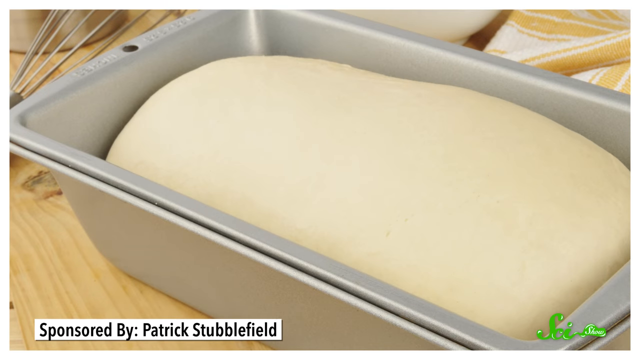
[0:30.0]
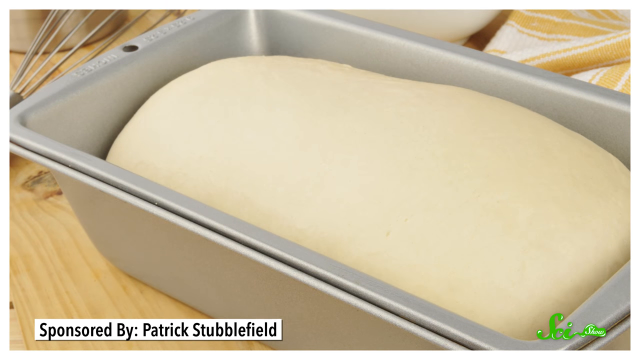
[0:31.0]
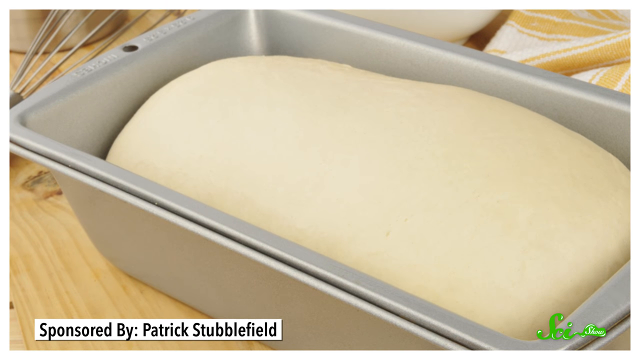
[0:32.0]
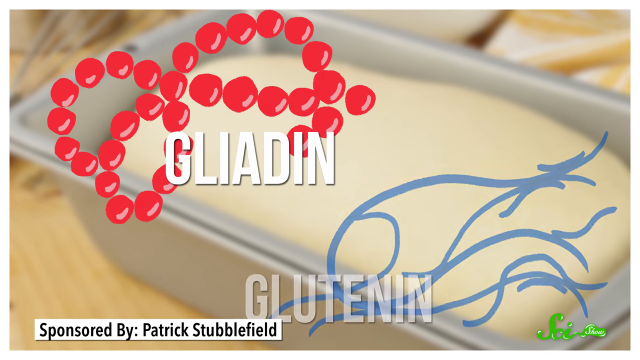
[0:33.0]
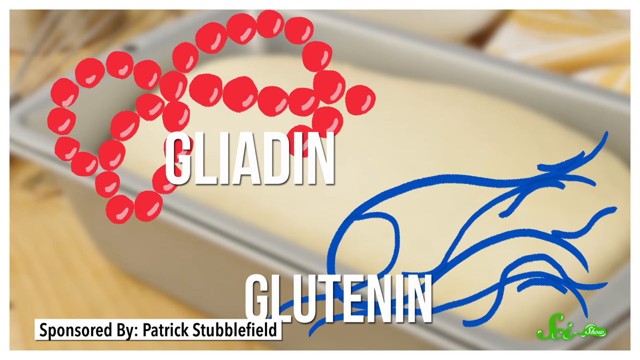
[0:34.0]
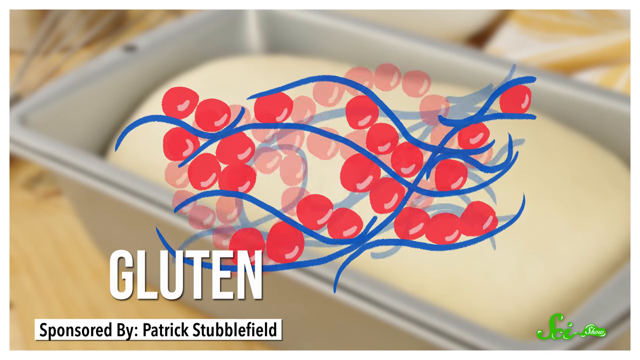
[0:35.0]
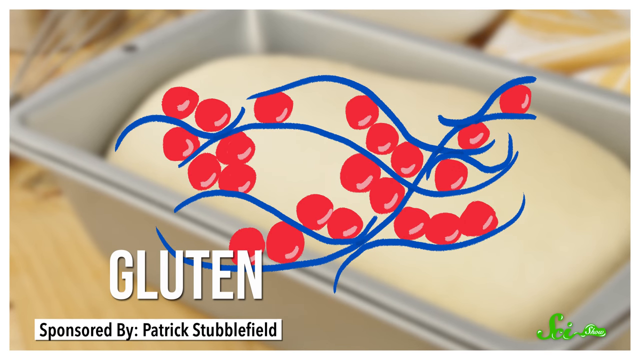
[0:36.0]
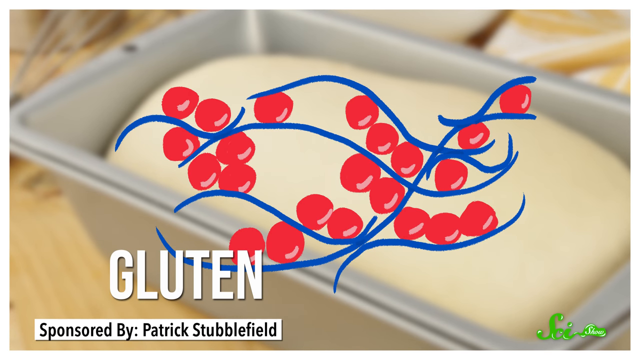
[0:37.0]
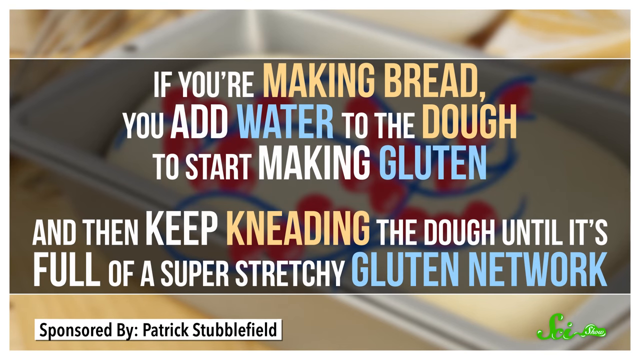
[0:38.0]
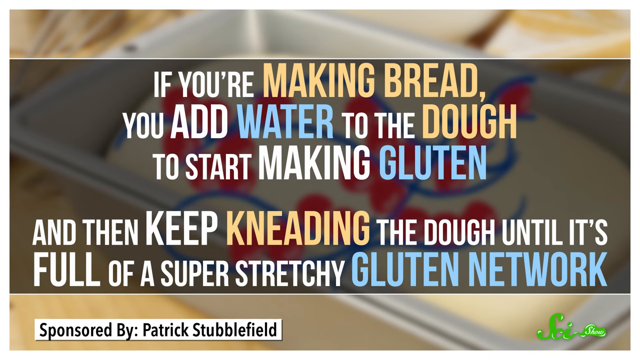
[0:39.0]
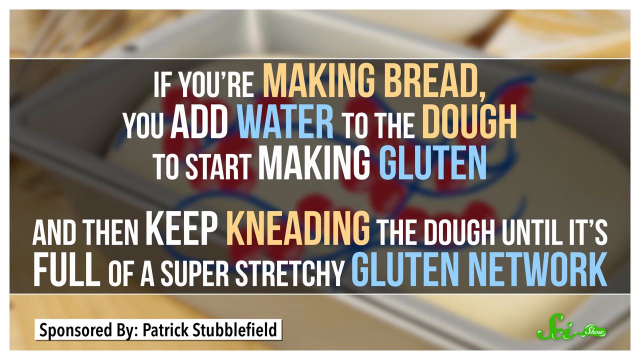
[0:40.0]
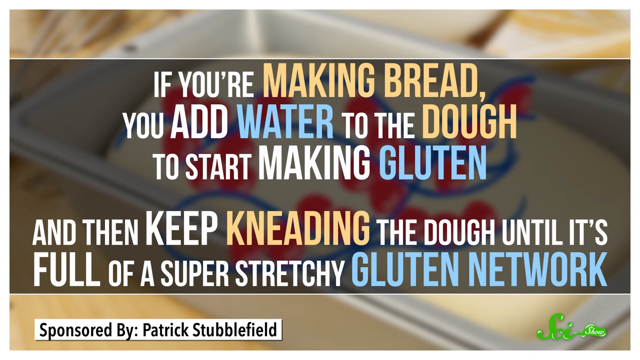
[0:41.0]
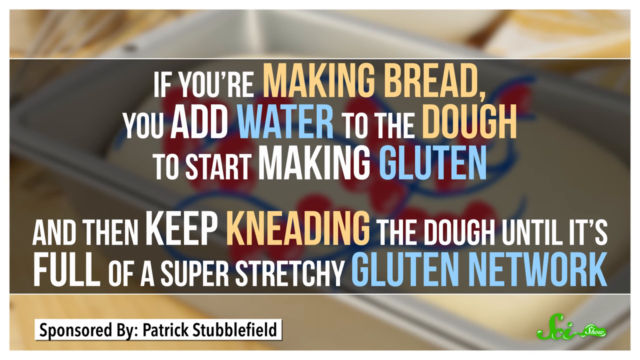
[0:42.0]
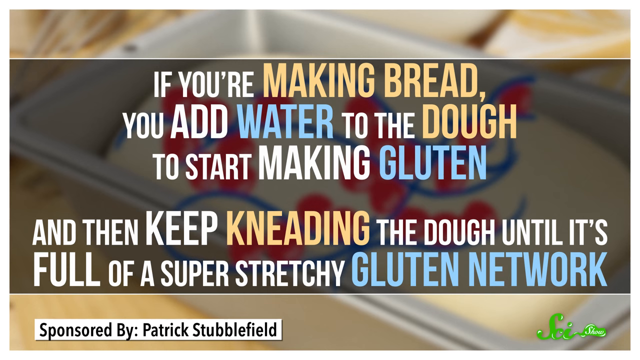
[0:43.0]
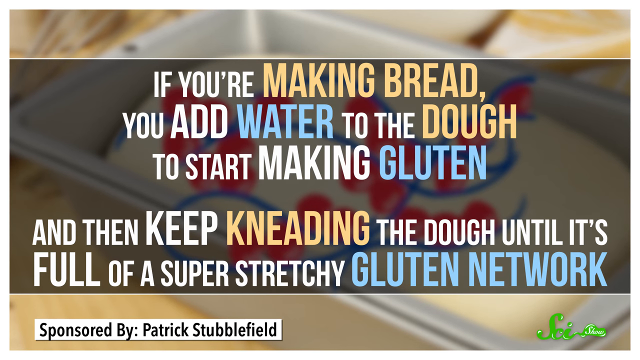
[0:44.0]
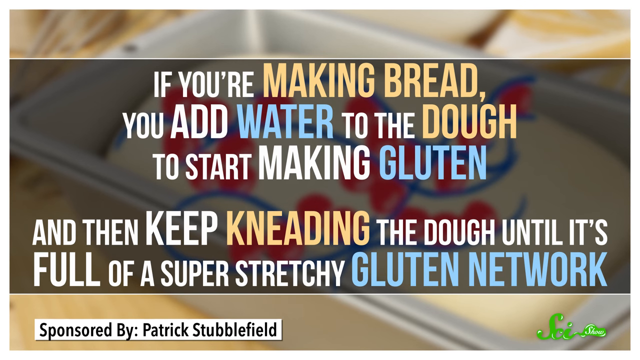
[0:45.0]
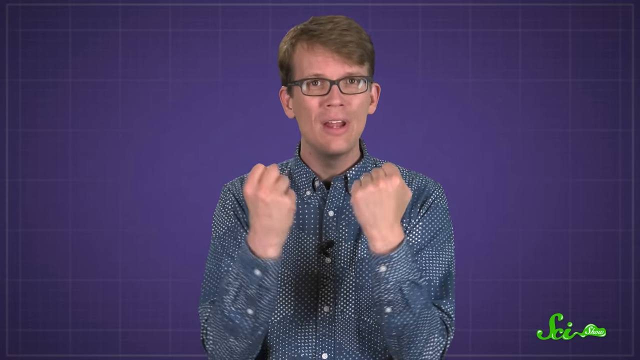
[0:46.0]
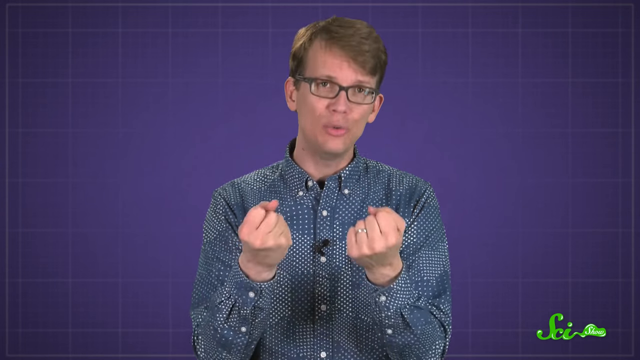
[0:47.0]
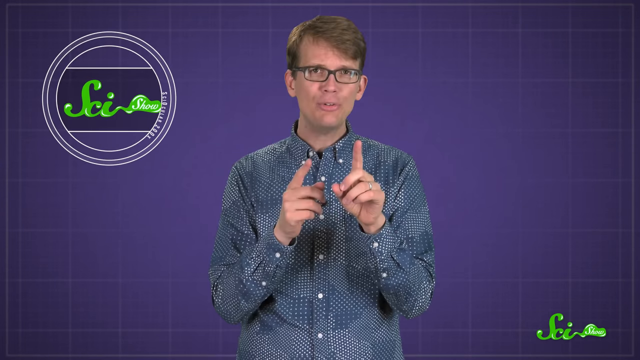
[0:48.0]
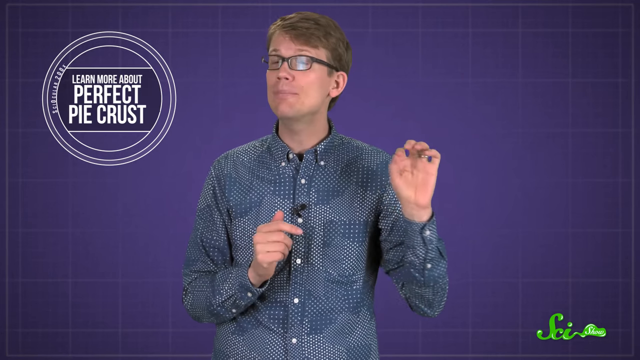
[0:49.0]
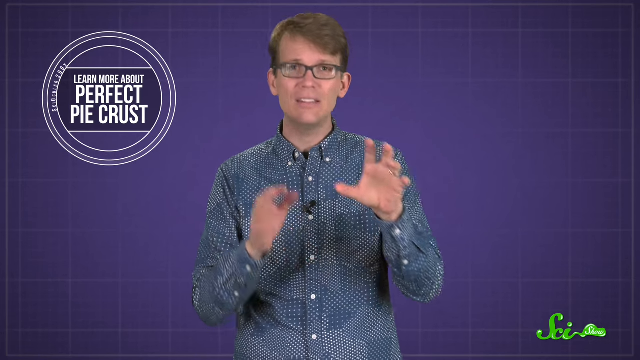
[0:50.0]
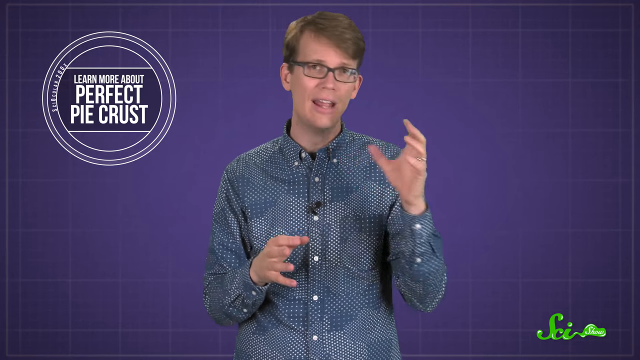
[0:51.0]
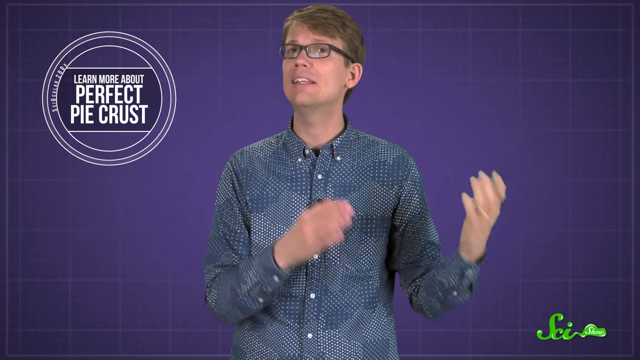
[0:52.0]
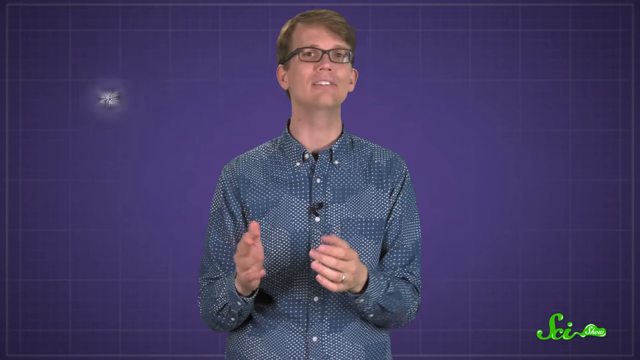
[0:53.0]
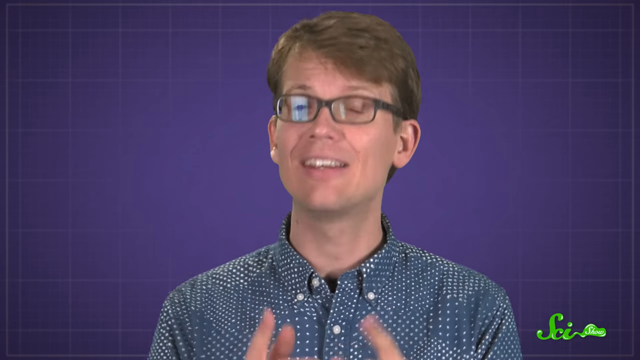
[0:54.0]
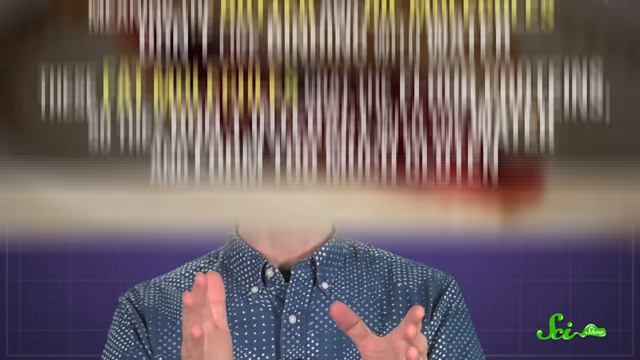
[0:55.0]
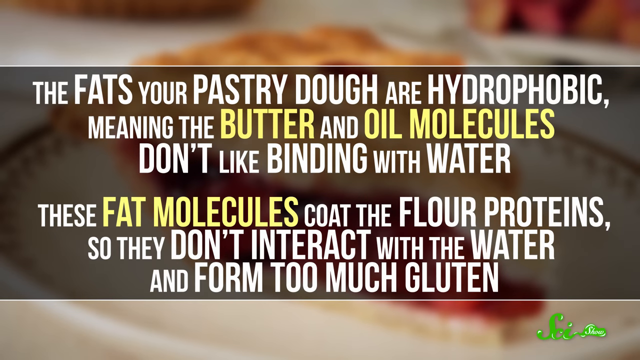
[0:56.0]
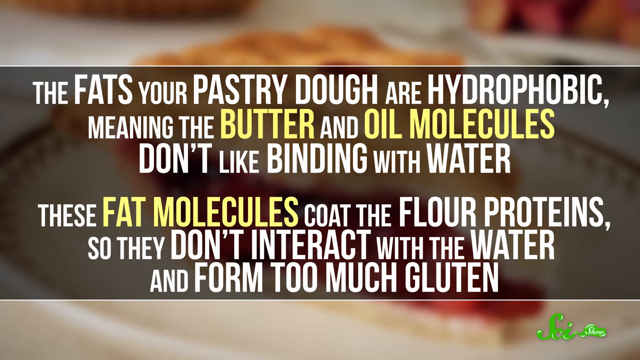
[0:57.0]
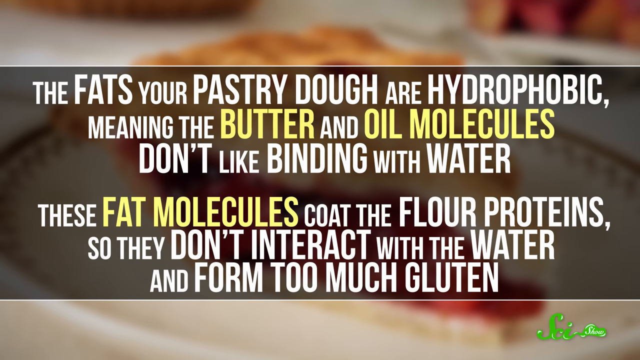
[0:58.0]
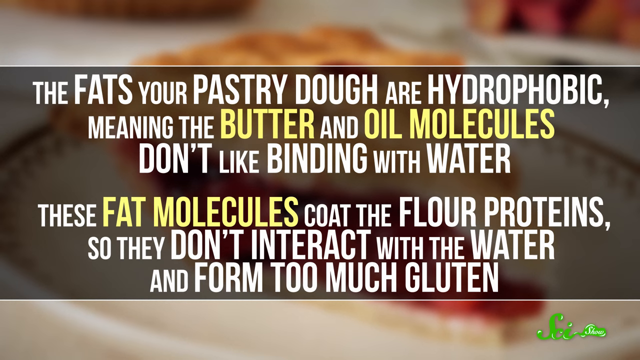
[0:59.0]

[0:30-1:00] A loaf of bread rises in a metal pan; there are two of them. Text reads "sponsored by Patrick Stubblefield." Text then reads "gliadin and glutenin" alongside what look like amino acids or something similar, which are put together and then look like blue fibers with little red balls in them. Text reads "if you're making bread, you add water to the dough and to start making gluten, and then keep kneading the dough until it's full of a super stretchy gluten network." With the "sponsored by Patrick Stubblefield" text still showing, a man is shown talking. A circle off to the left-hand side reads "LEARN MORE ABOUT PERFECT PIE CRUST" in all capital letters.